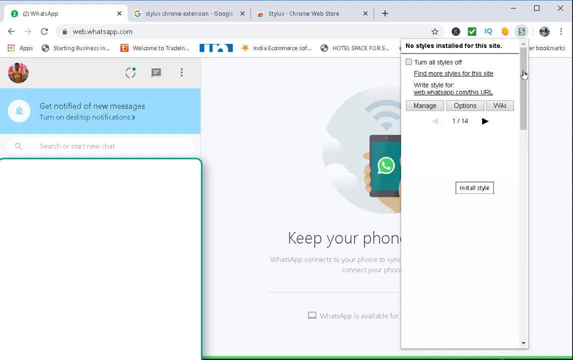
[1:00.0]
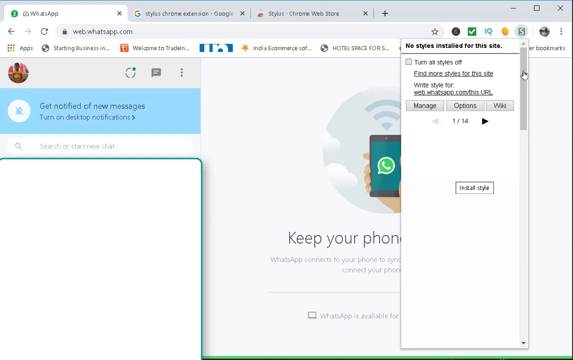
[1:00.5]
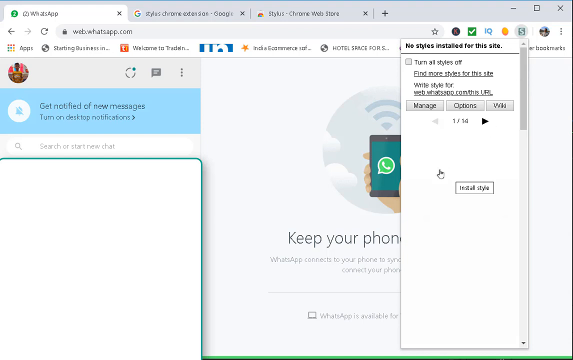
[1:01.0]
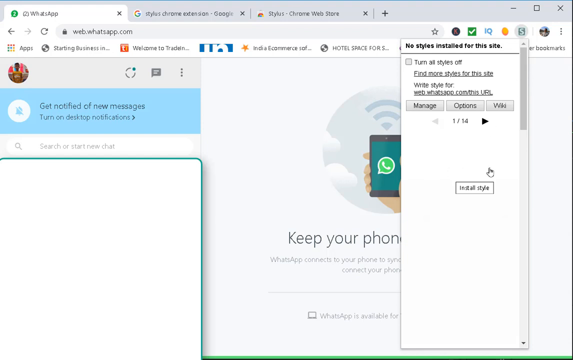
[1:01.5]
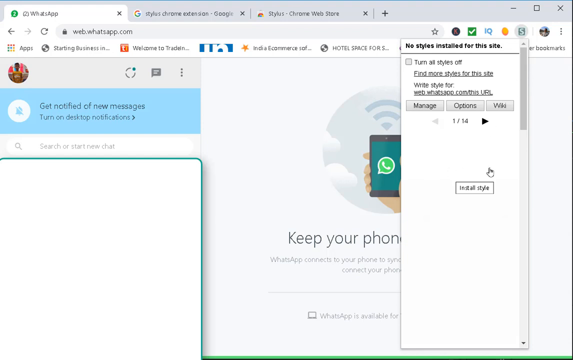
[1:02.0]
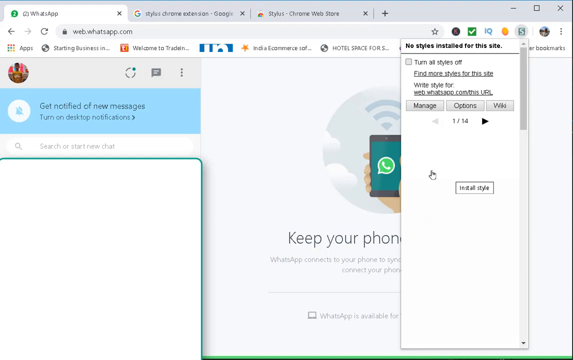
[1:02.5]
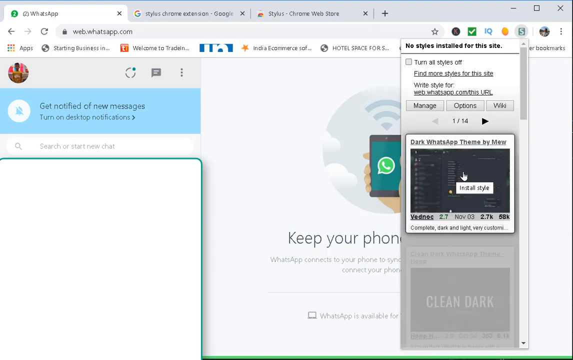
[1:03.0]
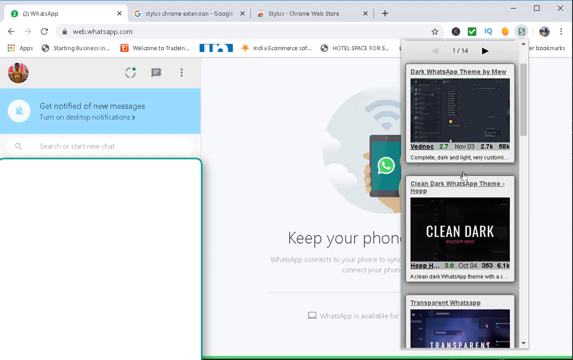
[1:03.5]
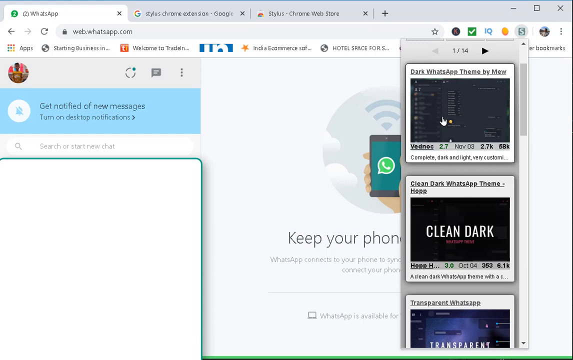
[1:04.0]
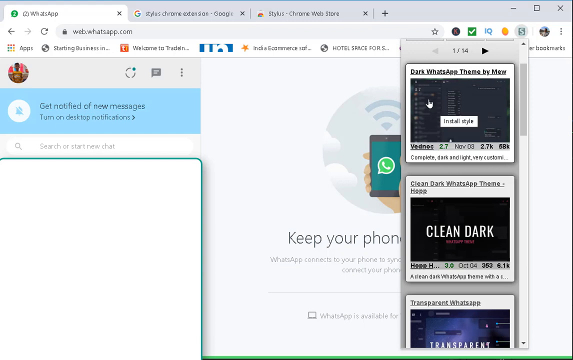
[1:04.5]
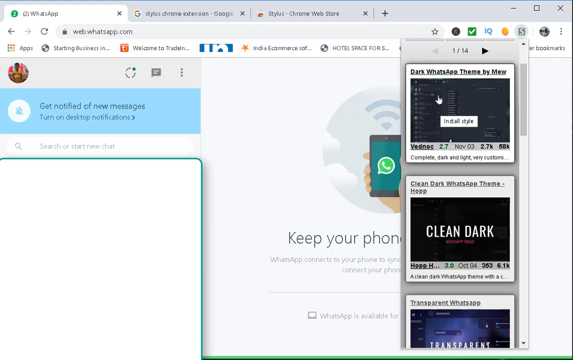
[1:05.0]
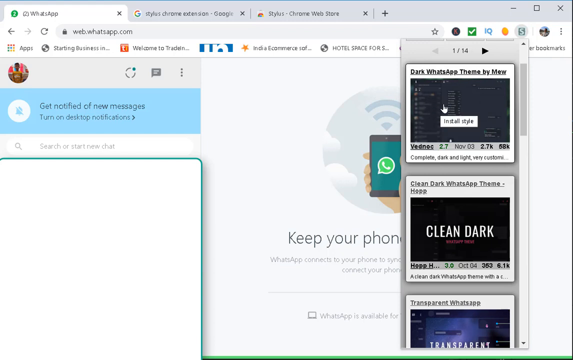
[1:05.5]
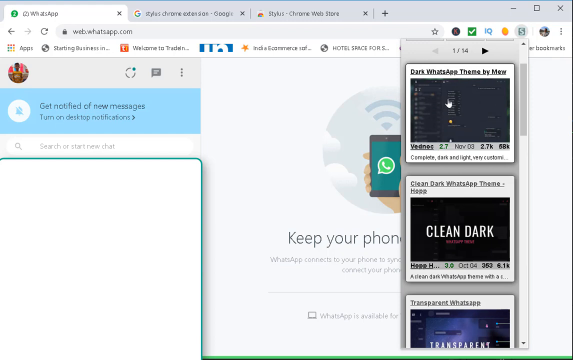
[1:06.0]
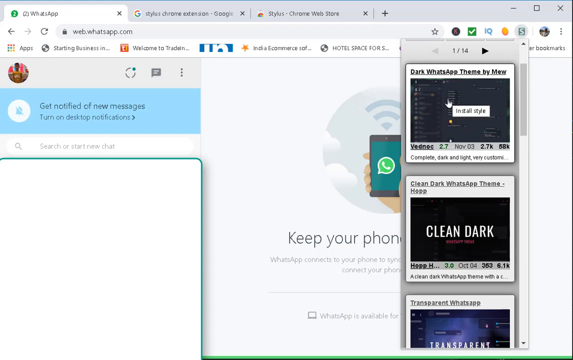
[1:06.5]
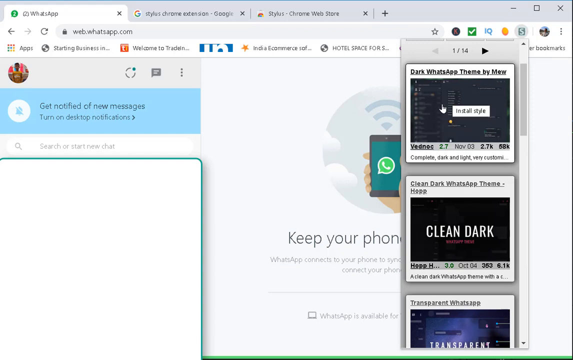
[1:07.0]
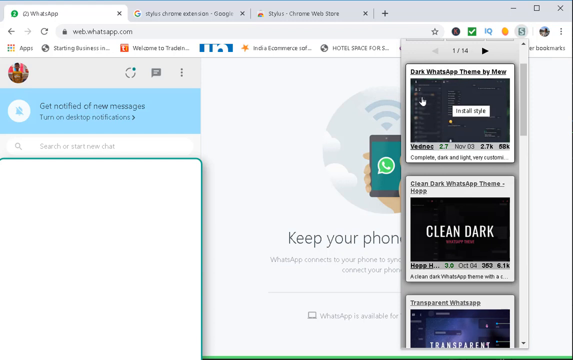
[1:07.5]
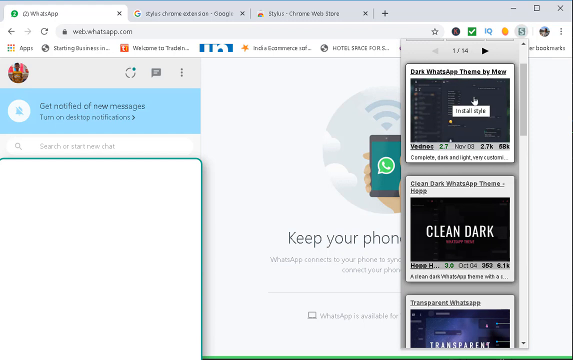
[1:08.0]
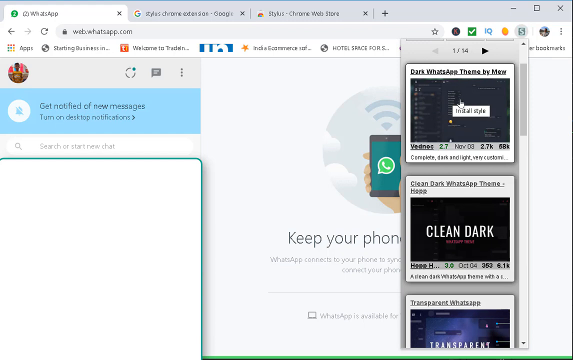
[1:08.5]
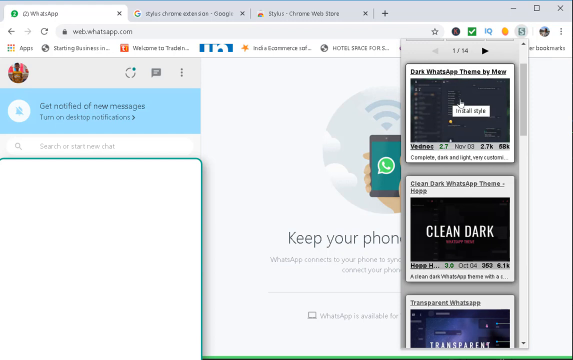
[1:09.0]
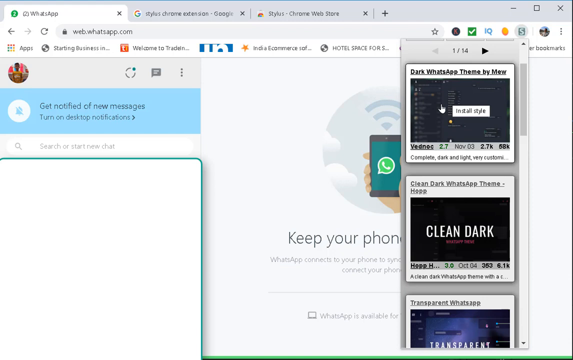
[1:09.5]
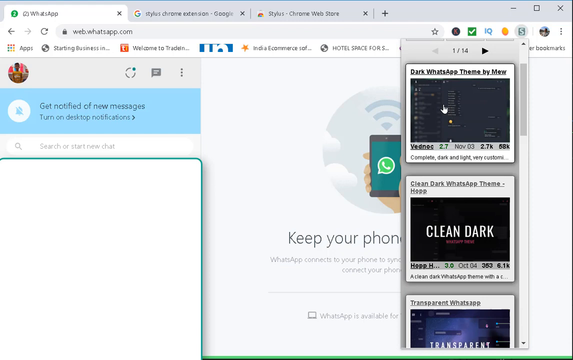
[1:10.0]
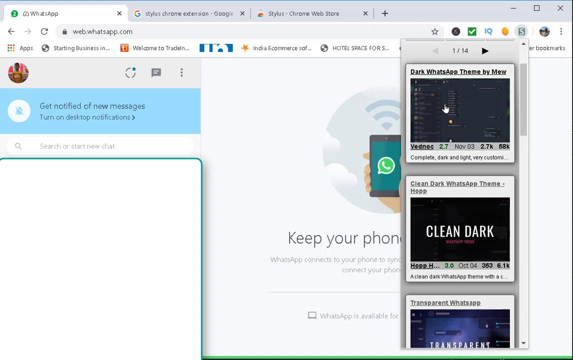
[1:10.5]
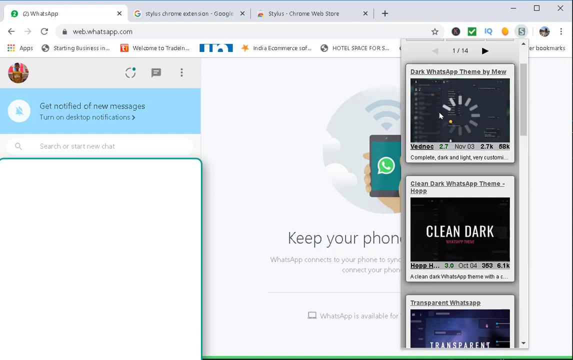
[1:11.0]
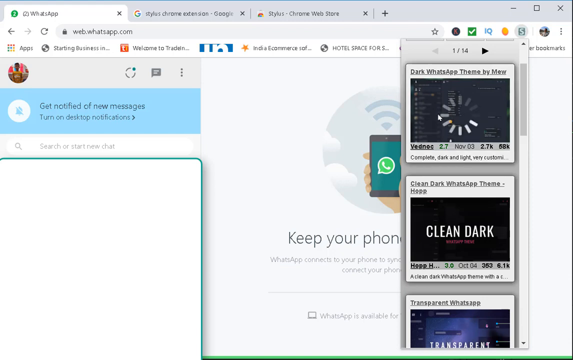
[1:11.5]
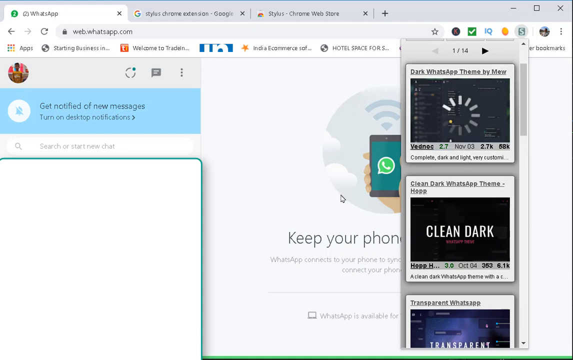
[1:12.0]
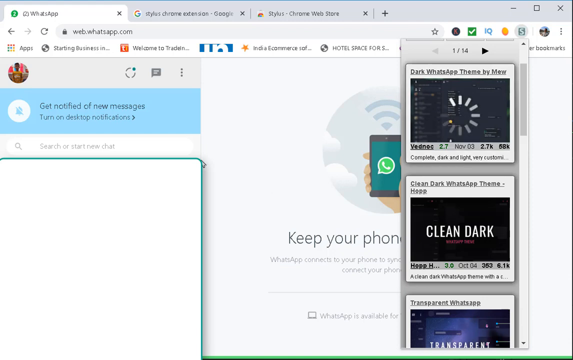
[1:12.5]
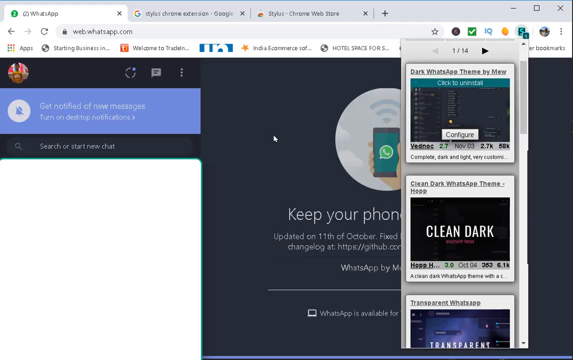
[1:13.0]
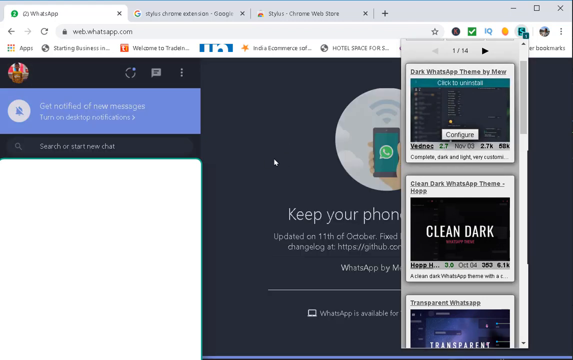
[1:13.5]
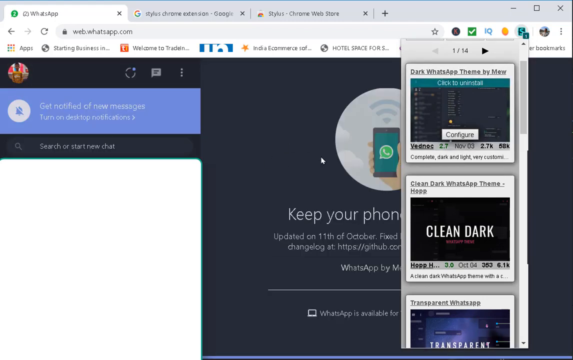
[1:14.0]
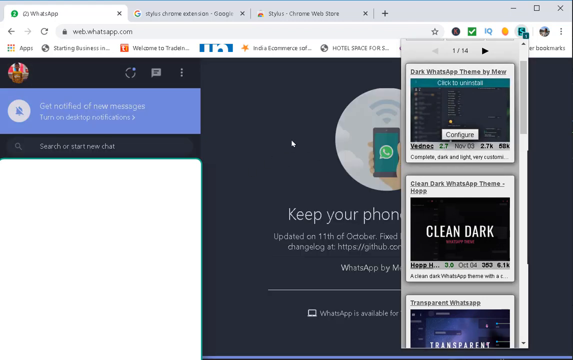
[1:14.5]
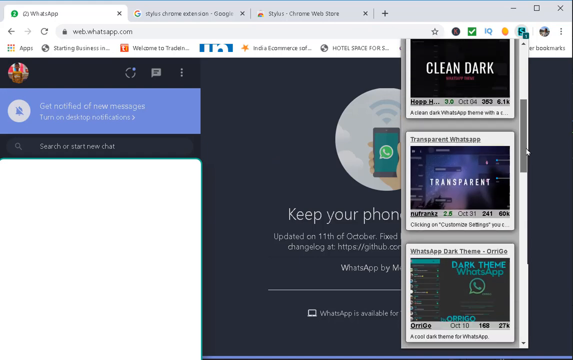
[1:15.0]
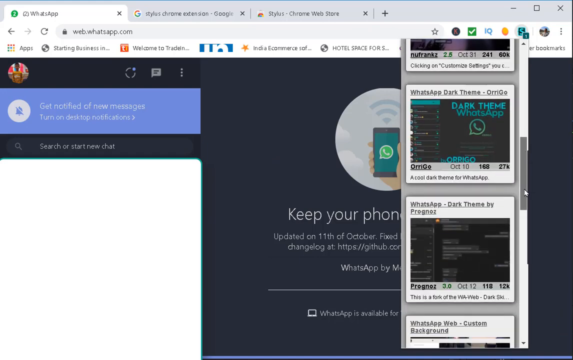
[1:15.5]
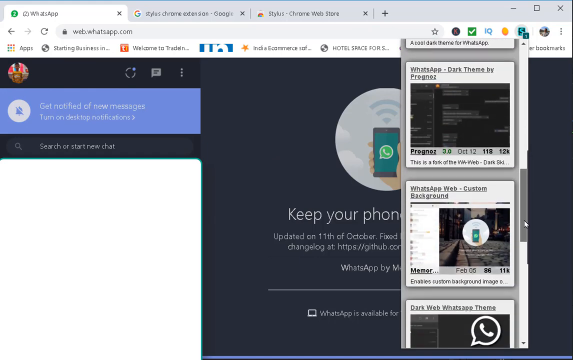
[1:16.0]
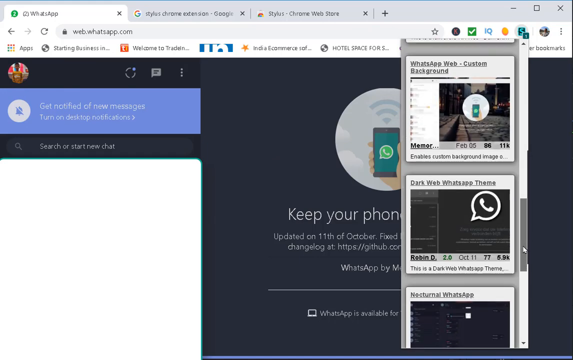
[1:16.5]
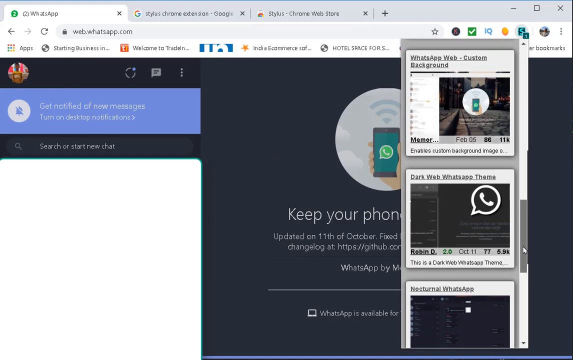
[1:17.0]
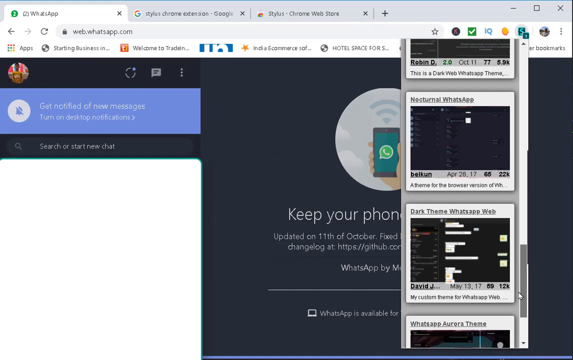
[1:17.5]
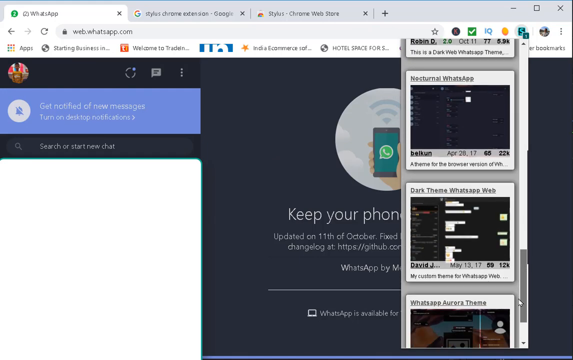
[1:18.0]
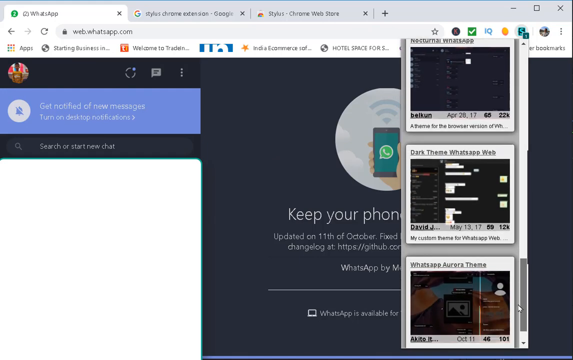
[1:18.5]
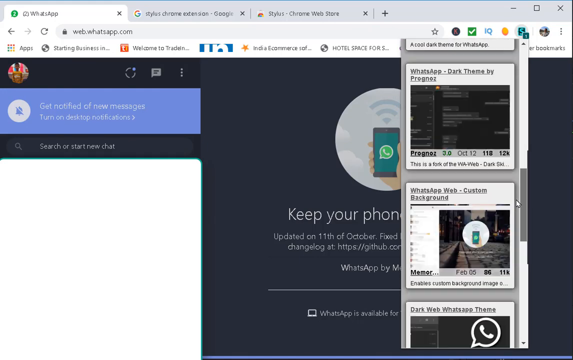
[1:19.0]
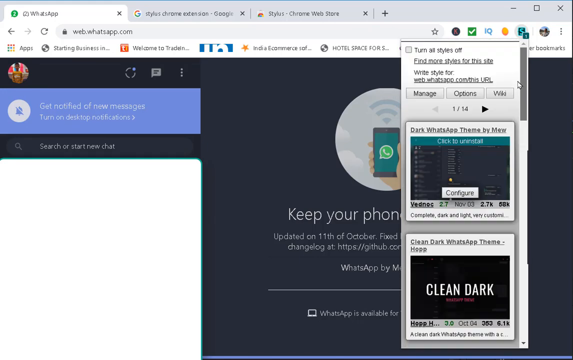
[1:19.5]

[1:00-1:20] A theme is installed. There is a tag reading "clean" and a tag reading "whatsapp theme by mio", and many themes are listed, with a counter showing 1 out of 14. The view then returns to the WhatsApp homepage, where it says "keep your phone connected," now with a changed WhatsApp theme.